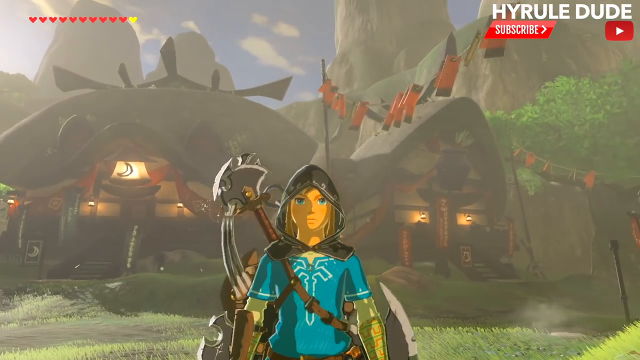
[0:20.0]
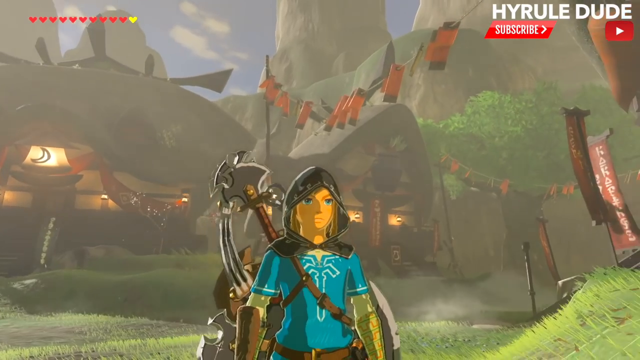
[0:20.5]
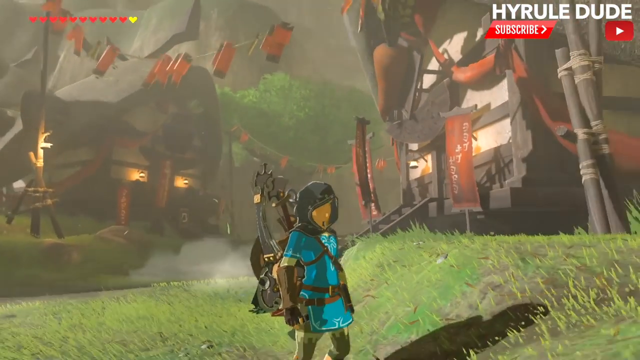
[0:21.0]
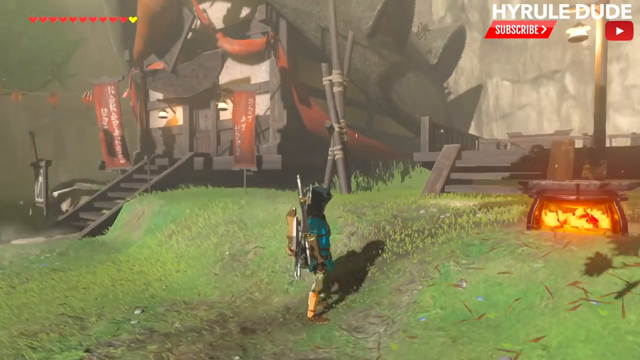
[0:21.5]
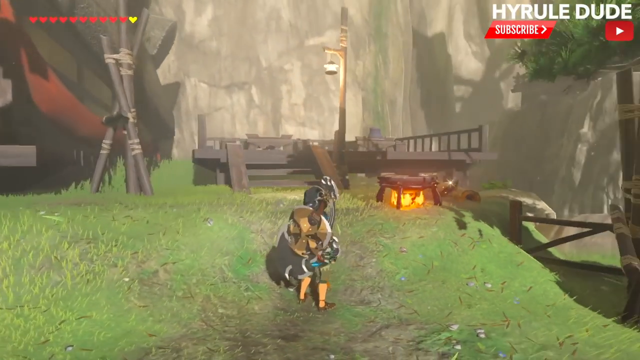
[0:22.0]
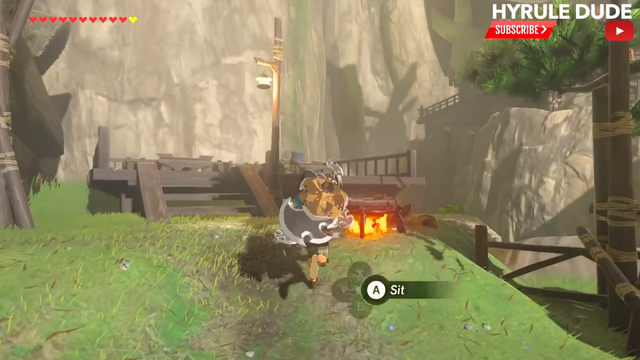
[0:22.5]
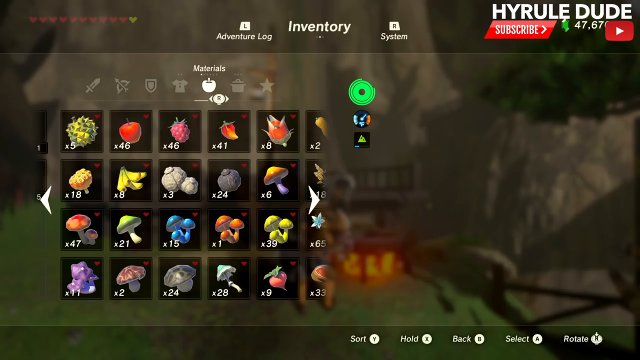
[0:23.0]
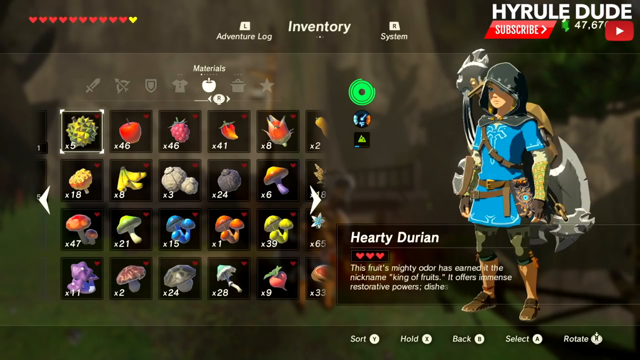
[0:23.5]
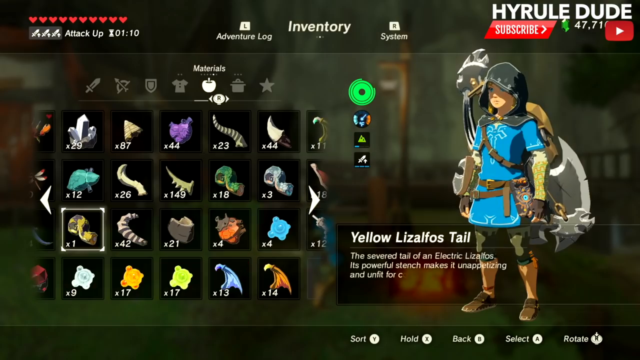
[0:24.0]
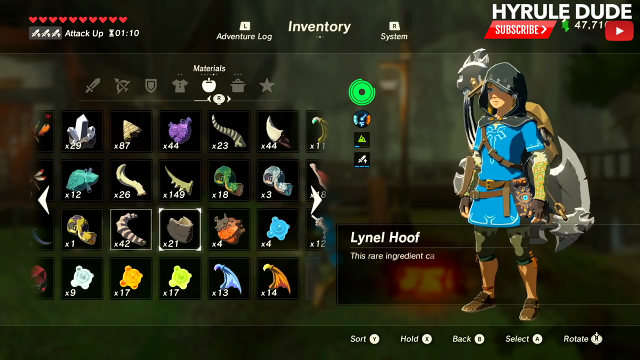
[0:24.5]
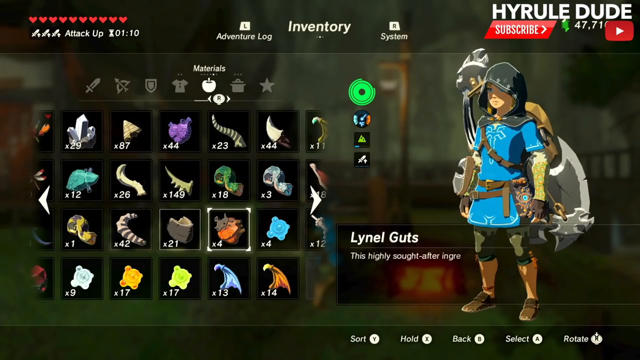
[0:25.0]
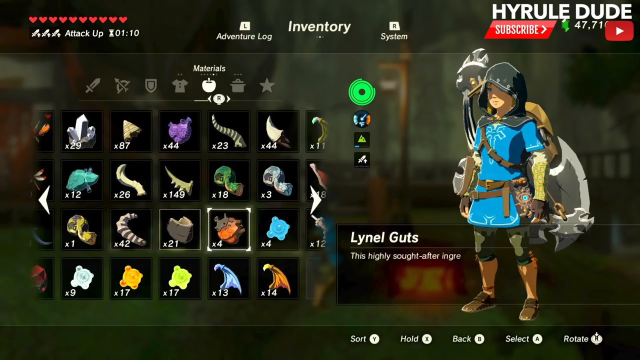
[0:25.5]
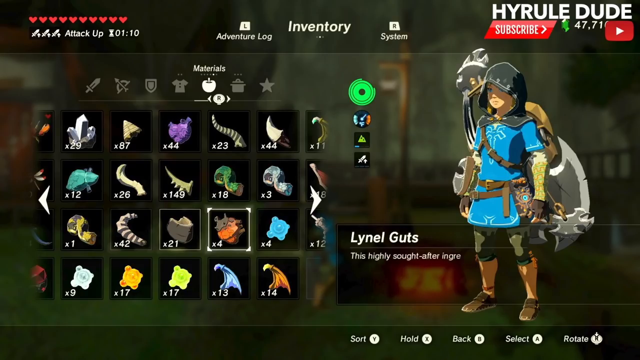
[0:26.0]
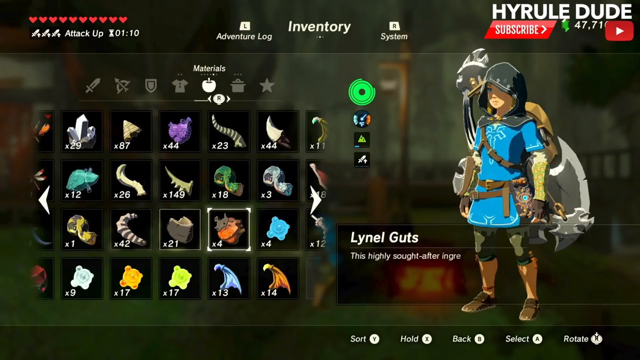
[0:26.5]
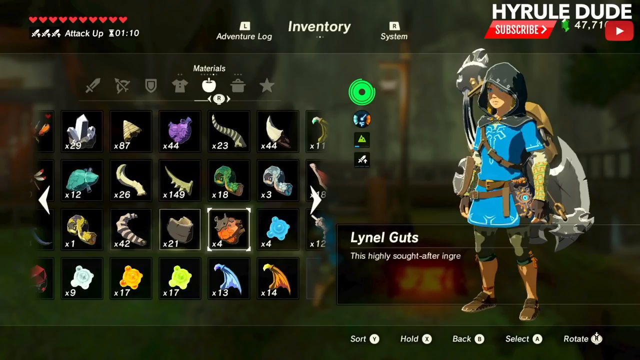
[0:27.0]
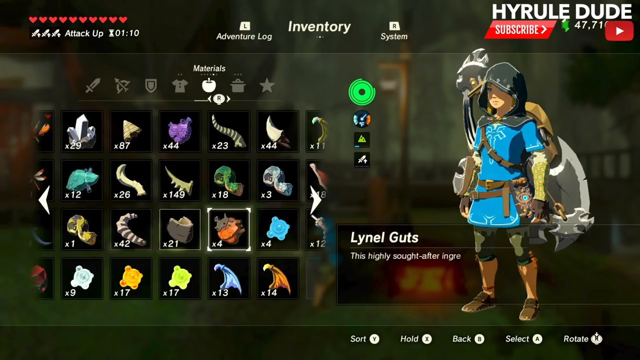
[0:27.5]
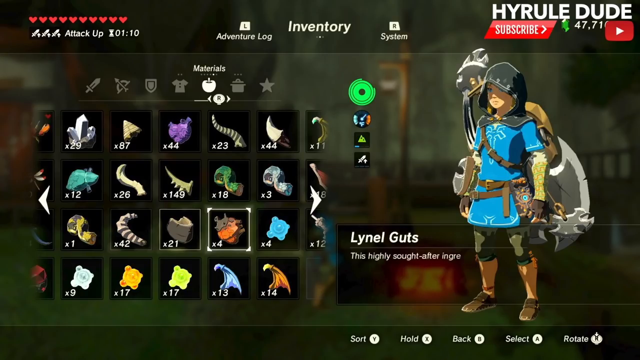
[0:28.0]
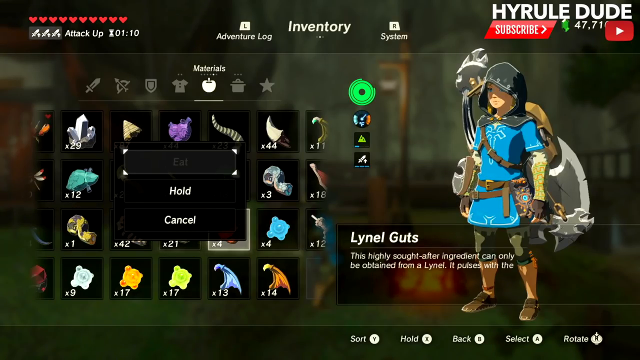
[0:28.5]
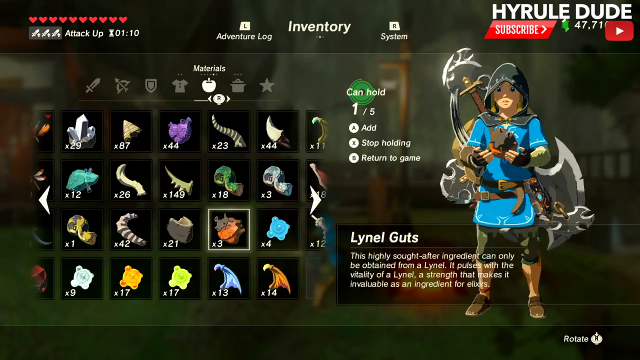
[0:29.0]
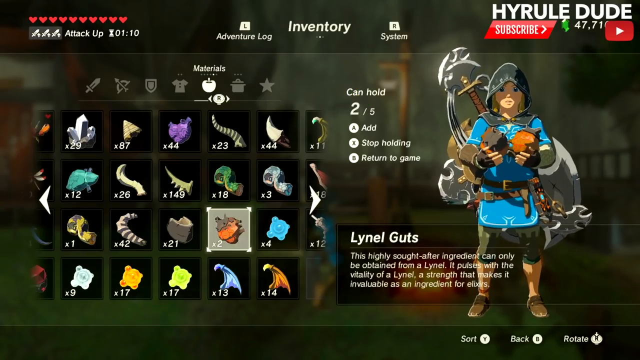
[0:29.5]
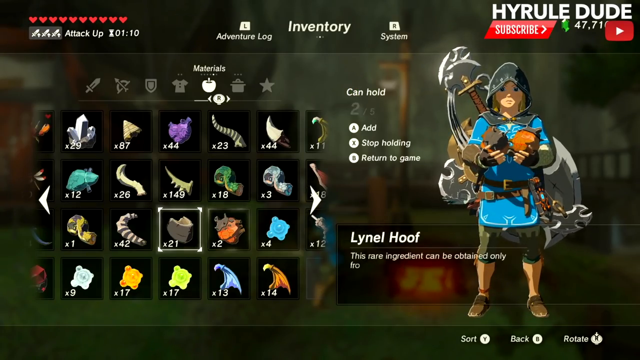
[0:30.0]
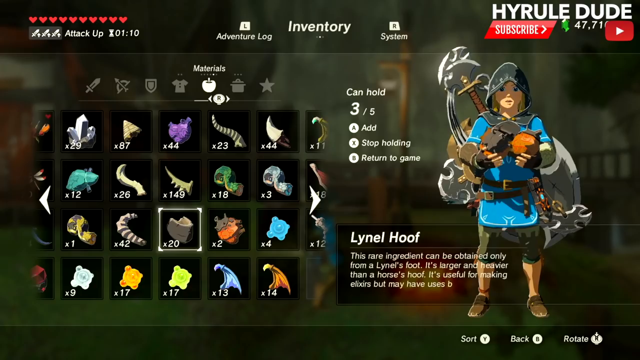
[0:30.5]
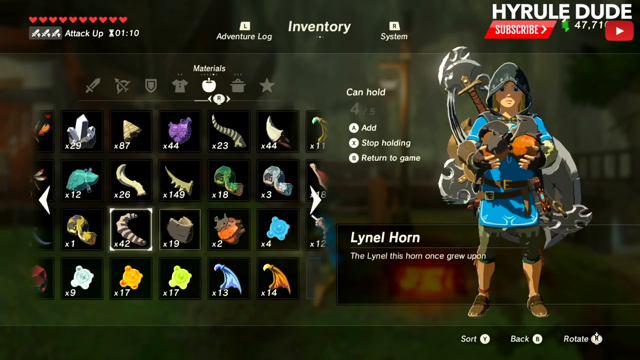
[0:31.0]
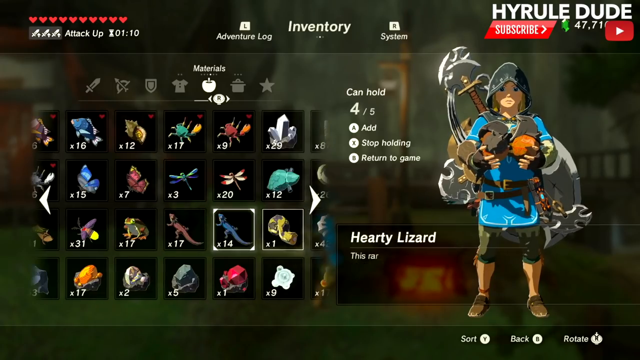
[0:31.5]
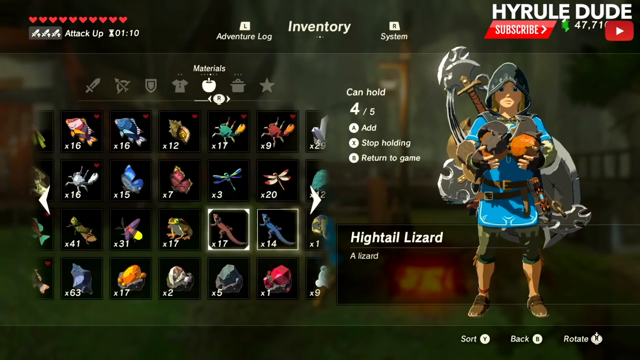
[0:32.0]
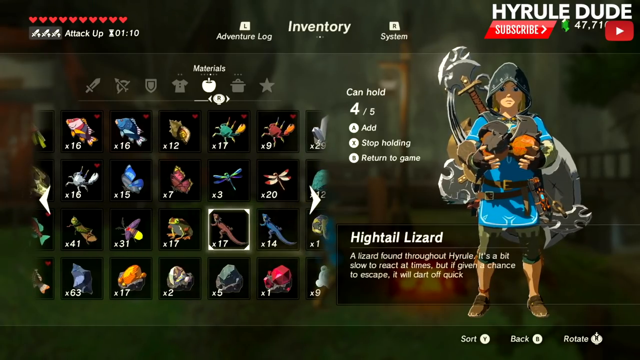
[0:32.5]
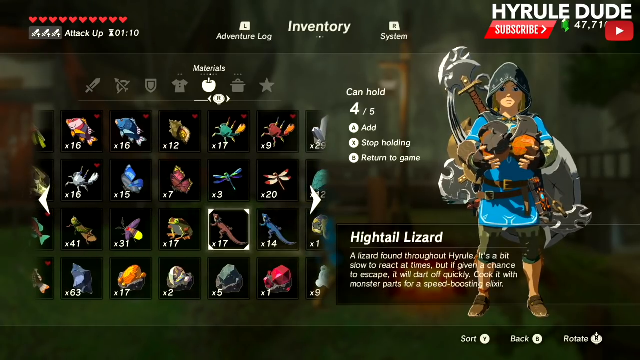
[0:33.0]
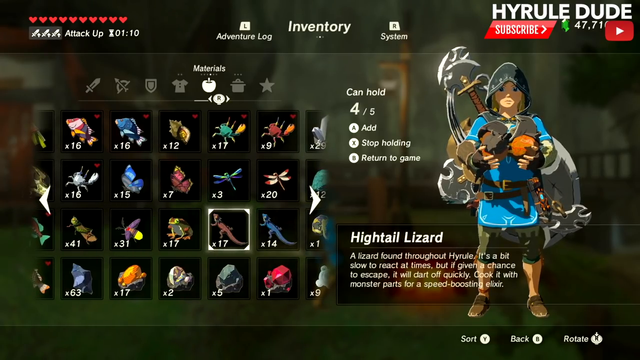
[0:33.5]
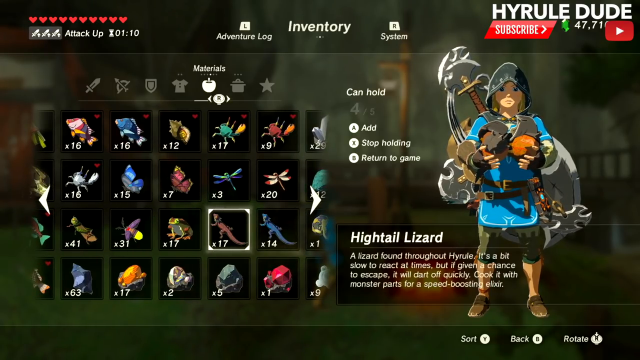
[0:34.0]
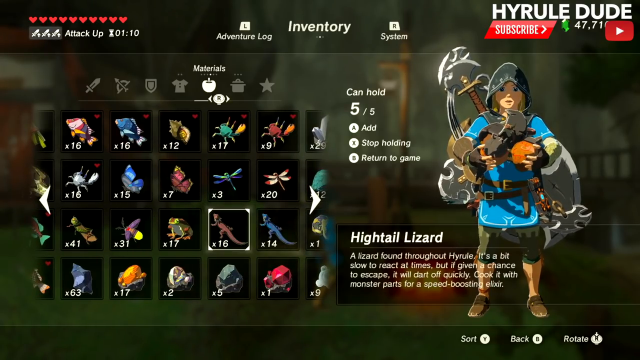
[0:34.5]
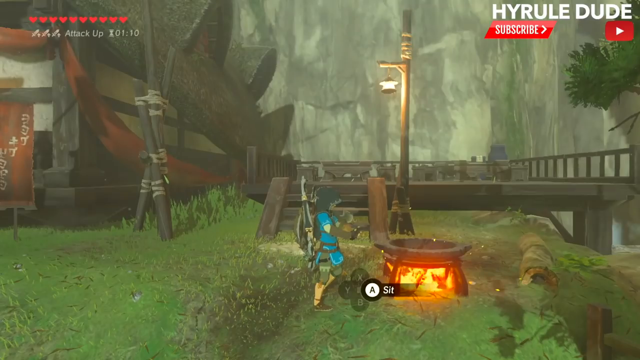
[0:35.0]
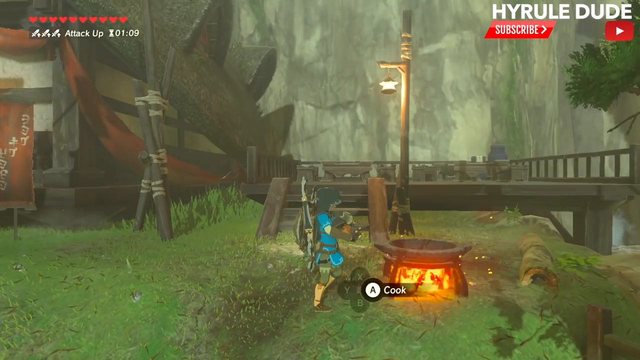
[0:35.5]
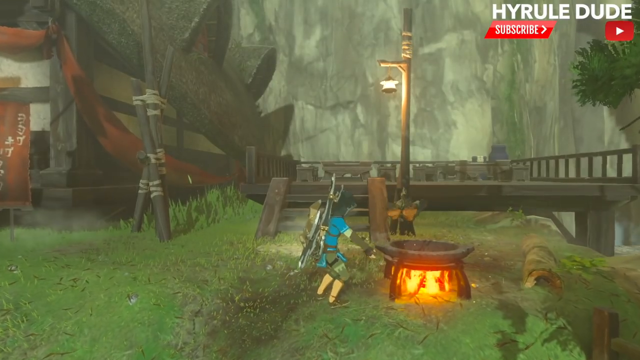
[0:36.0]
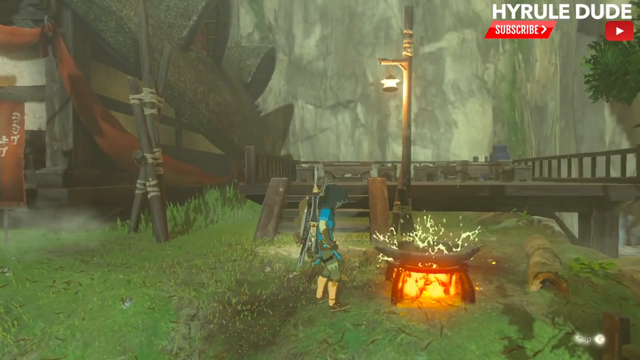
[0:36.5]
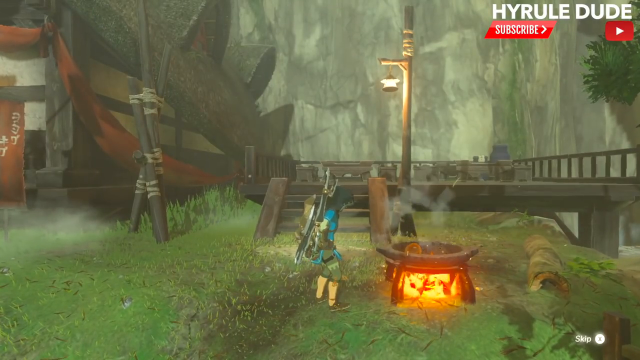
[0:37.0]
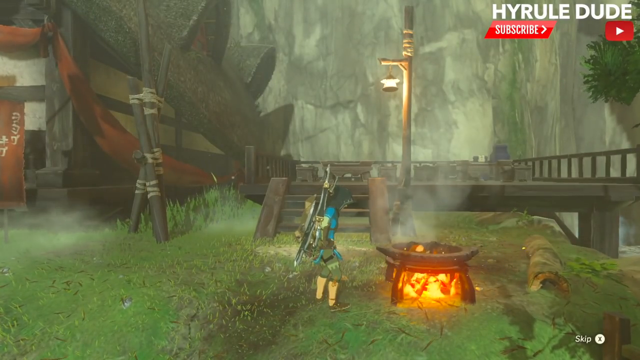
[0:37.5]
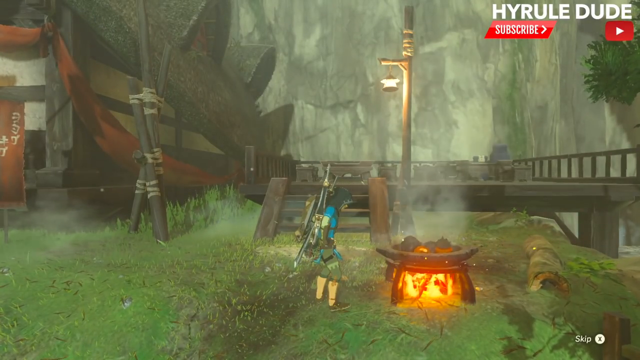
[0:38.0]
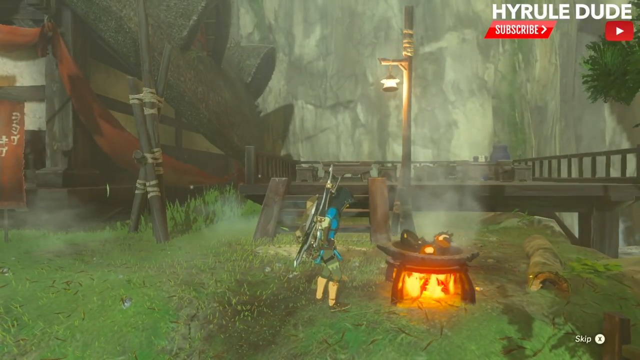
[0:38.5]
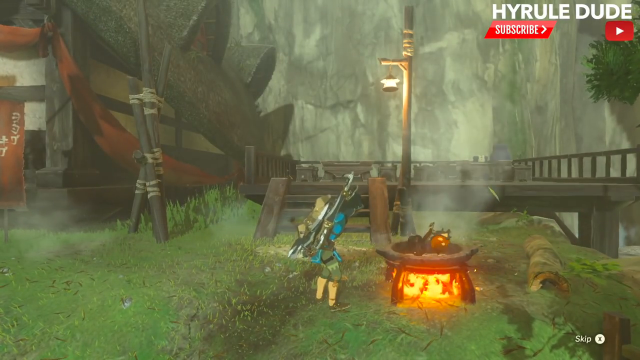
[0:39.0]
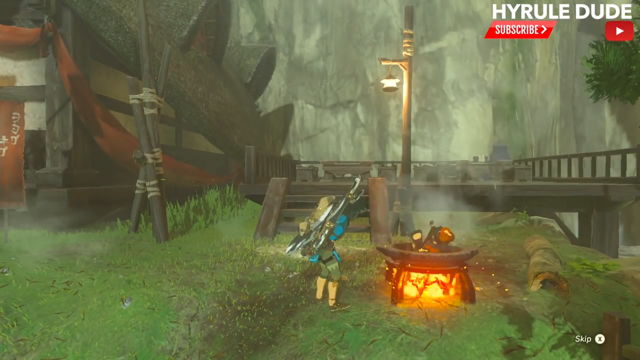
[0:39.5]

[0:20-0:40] The screen shows a video game in which a person wears a short-sleeved, deep blue tunic and a black cloak. The person has blue eyes and stares straight ahead. Behind them is what looks like an axe blade on a wooden handle, and other carved metal objects protrude from behind the person's back. The camera pans away from the person, revealing houses to the left and right that look like medieval-type houses, along with grass and trees in the background and some red clothing hanging from a clothing line above. The camera pans around the person to show their back, where what looks like a large, curved metal weapon is strapped. The screen then changes to a matrix with four rows and about five to six columns, holding what look like mushrooms, flowers and fruits in different colors on a gray background. Across the top middle of the screen, white text reads "inventory." The character in the blue tunic pops up on the right side of the screen with the large-bladed weapon strapped behind him, and the name written to his left reads "Linao Hu." The matrix changes to show items and objects that are no longer food, and number four is selected. The objects from position four pop up in the character's hands, and he throws them into a pan placed over a burning fire, where they begin to bounce on the hot pan.